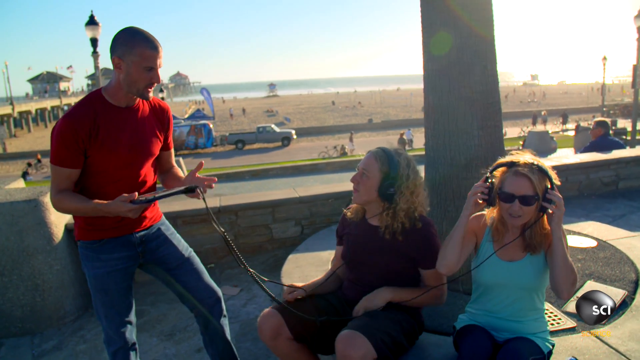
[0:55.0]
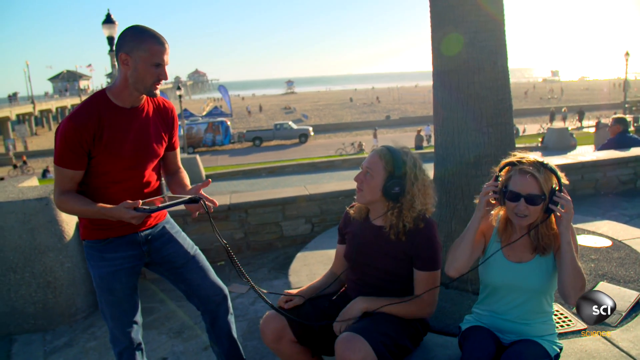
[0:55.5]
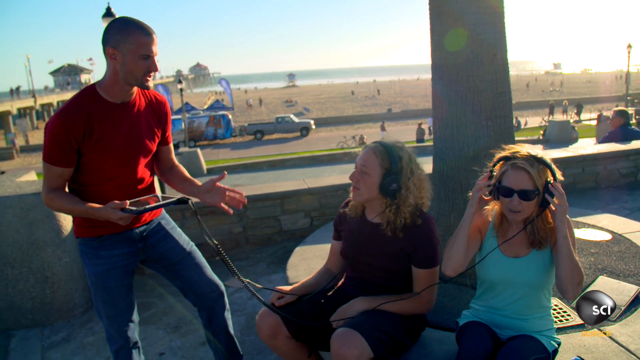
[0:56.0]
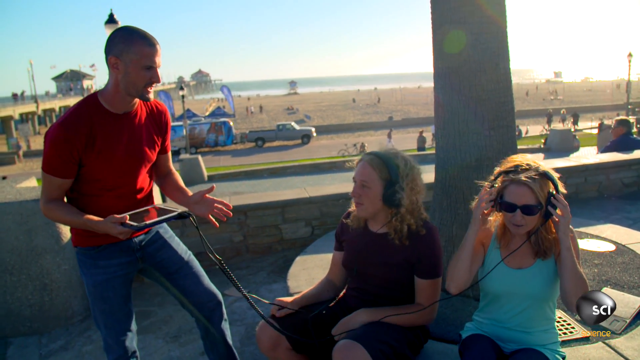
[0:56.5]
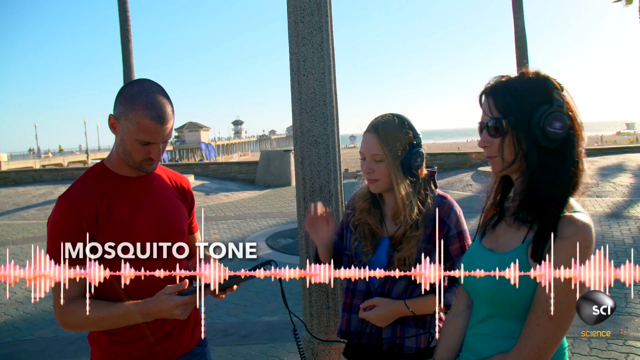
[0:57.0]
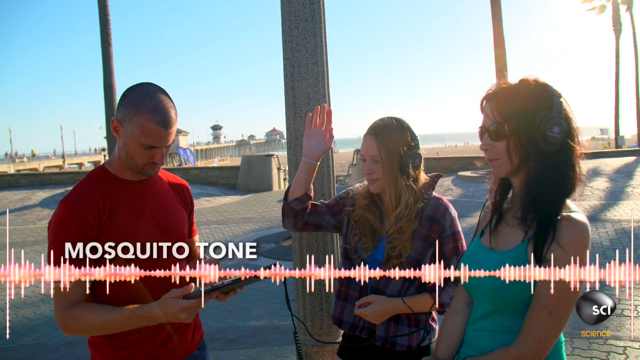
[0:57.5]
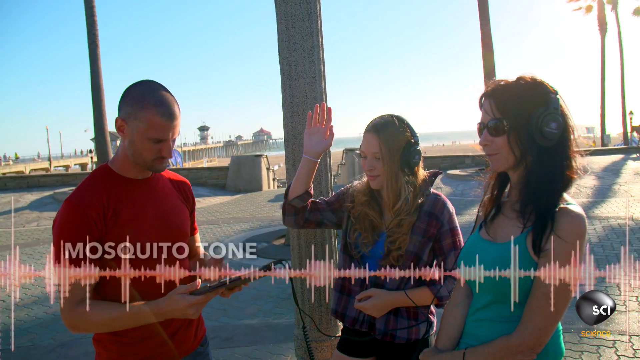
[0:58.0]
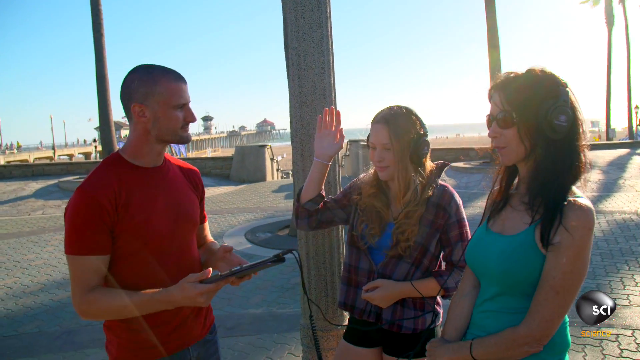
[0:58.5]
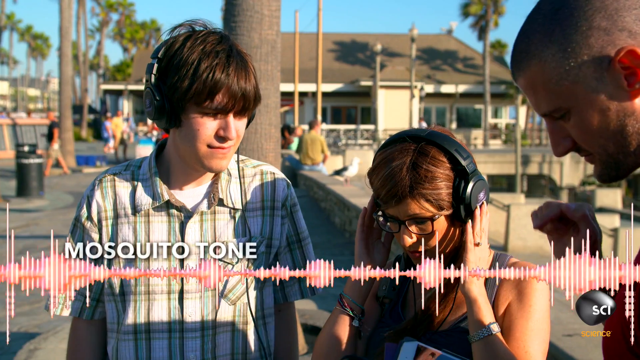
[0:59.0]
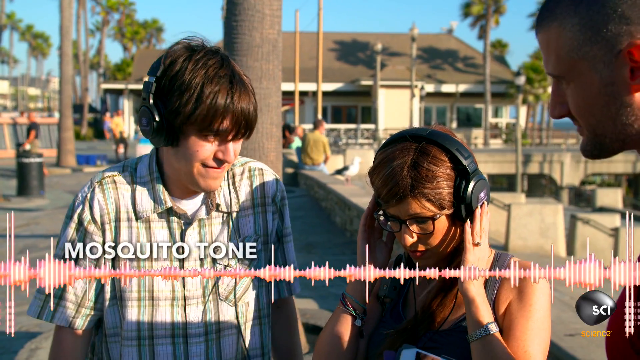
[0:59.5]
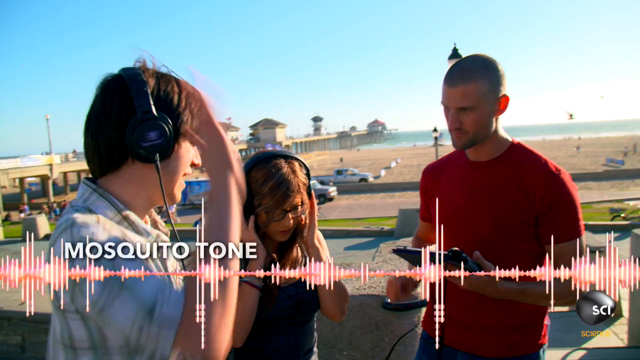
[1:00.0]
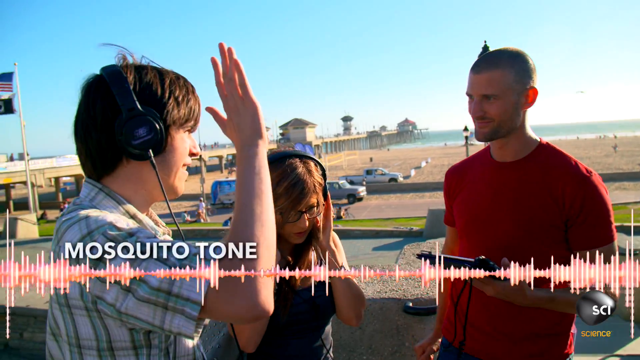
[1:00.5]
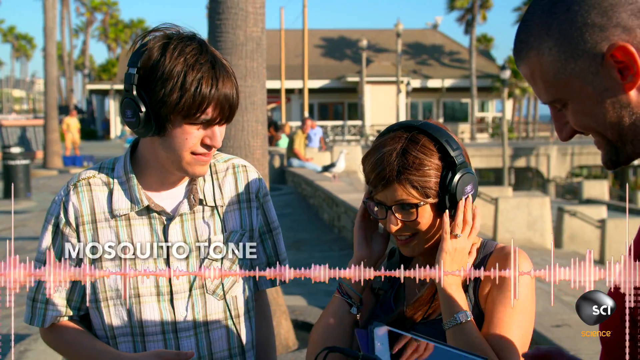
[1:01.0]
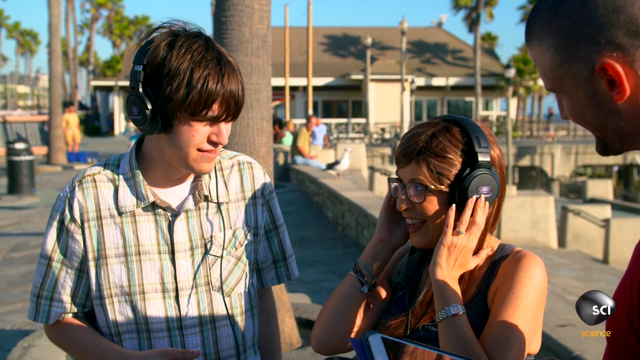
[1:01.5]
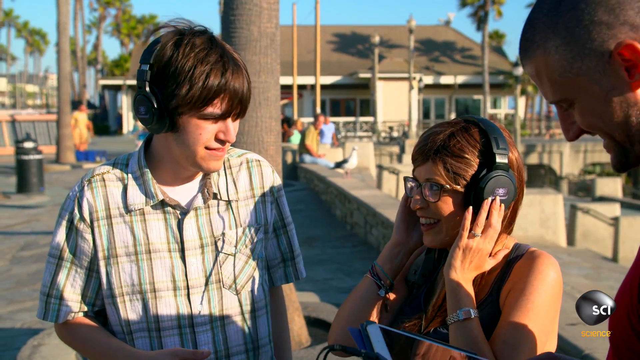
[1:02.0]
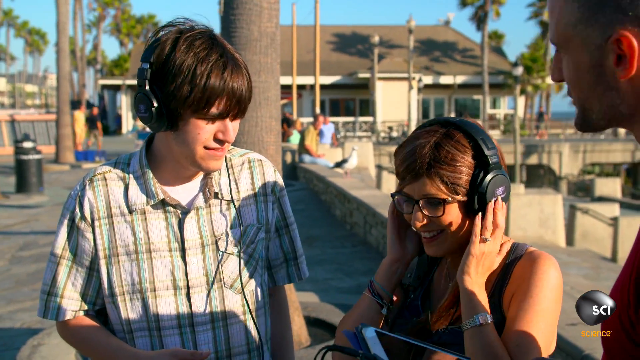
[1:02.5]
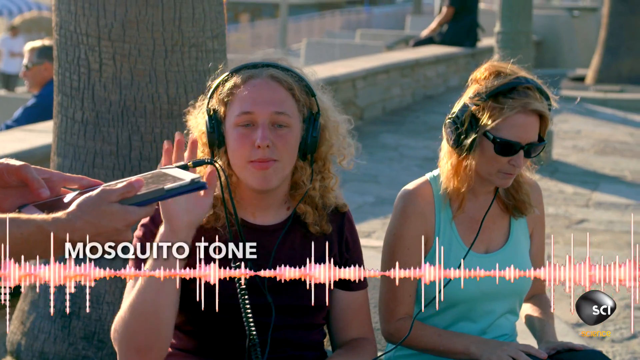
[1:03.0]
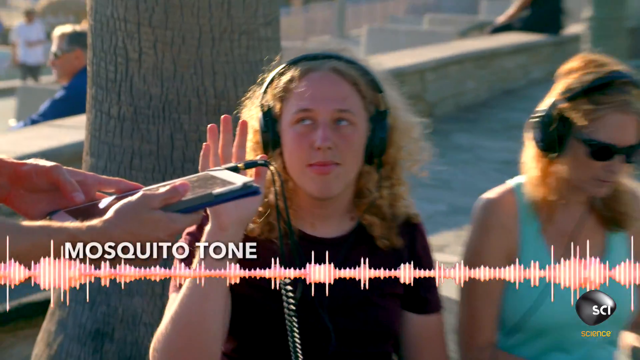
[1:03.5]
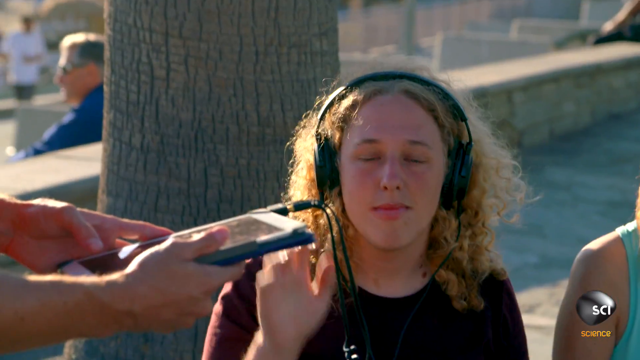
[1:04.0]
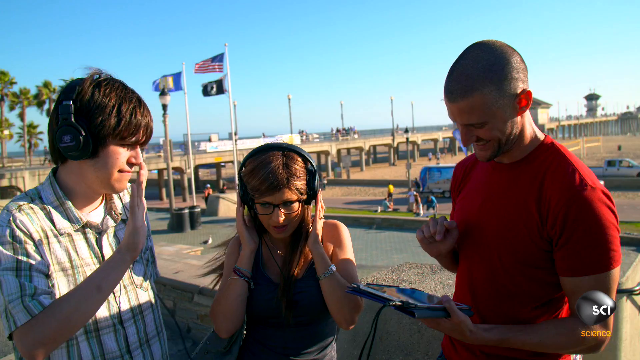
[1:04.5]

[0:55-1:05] On the boardwalk, the people put on the headphones and listen while the sound bar waves up and down, and some of them raise their hands, apparently when they hear something. Not everyone raises a hand: a boy in a plaid shirt and a girl with curly hair do, but the people next to them do not. The people usually appear in pairs, with only one in each pair raising a hand. The listeners make kind of bad faces as if the sound is unpleasant; the boy in the plaid shirt especially grimaces and kind of shrugs his shoulders up. Some of the women hold the ear parts closer to their ears.